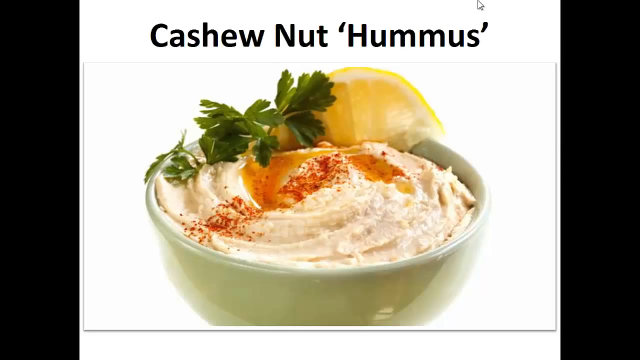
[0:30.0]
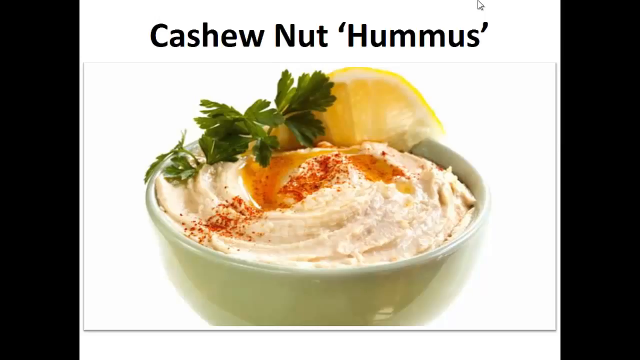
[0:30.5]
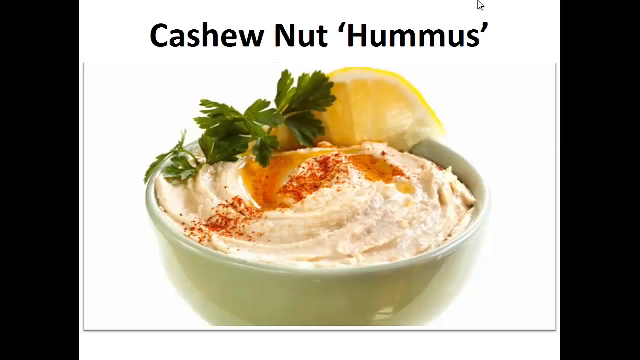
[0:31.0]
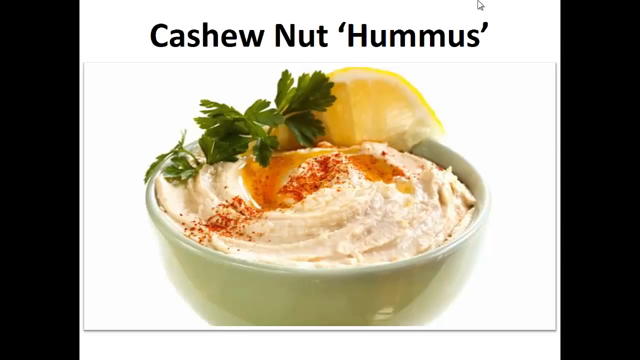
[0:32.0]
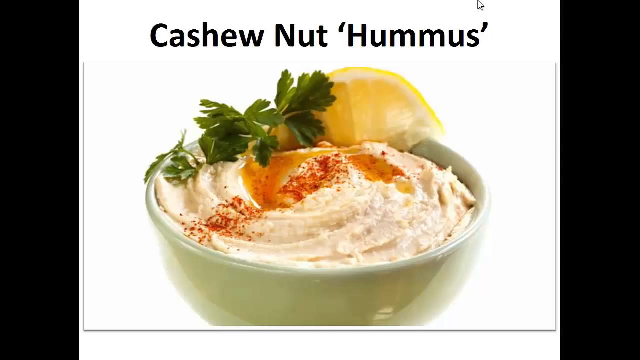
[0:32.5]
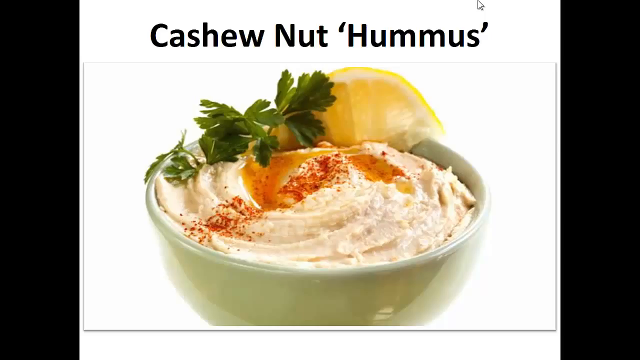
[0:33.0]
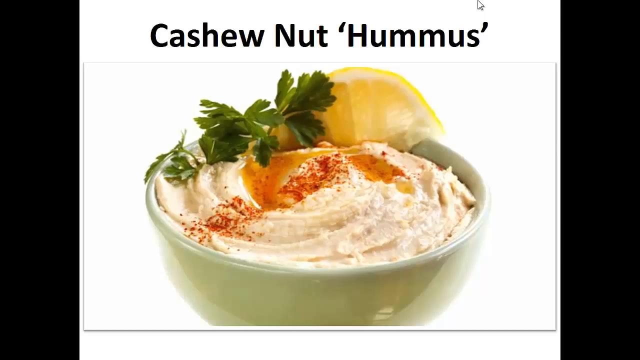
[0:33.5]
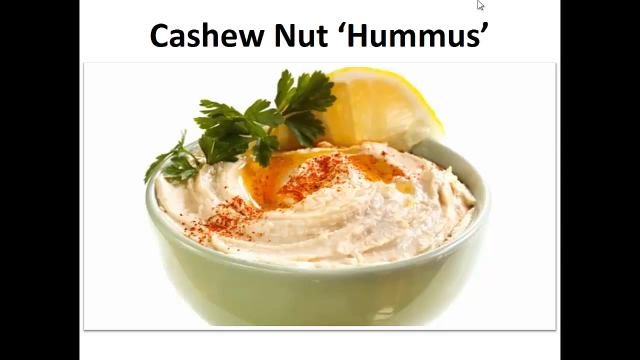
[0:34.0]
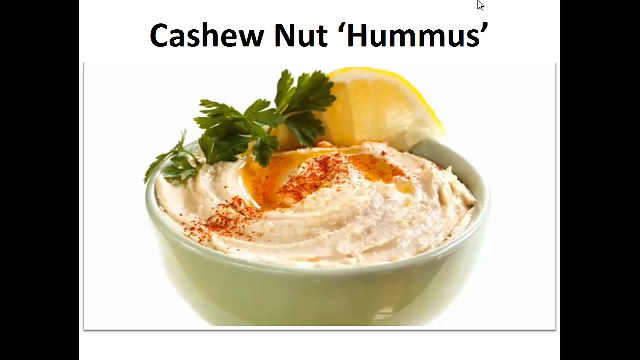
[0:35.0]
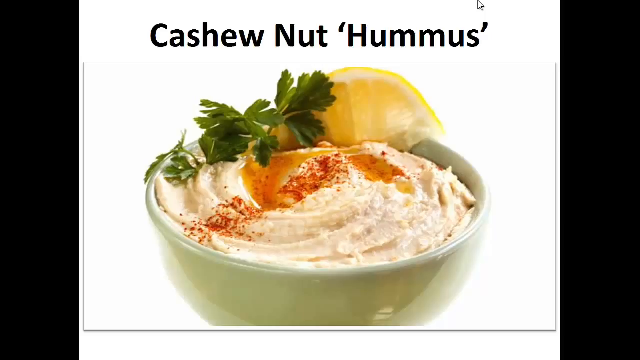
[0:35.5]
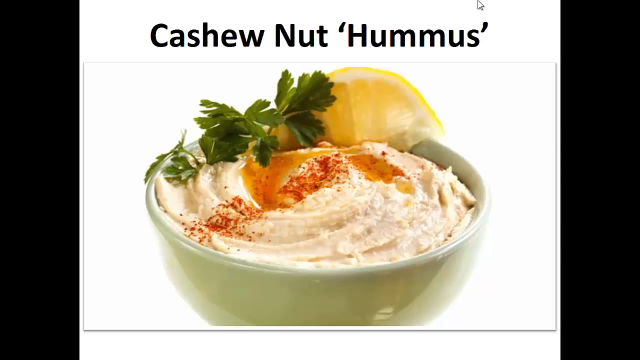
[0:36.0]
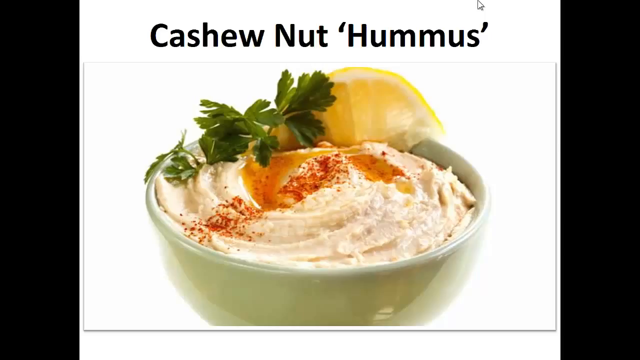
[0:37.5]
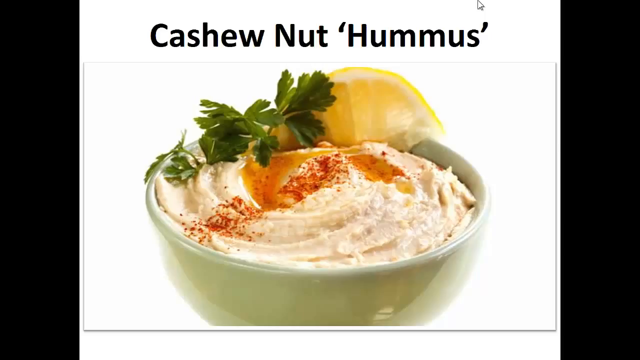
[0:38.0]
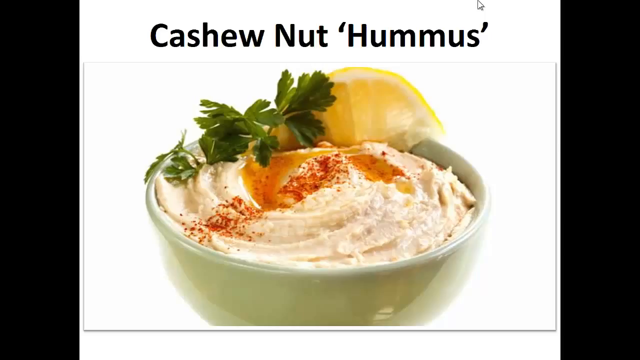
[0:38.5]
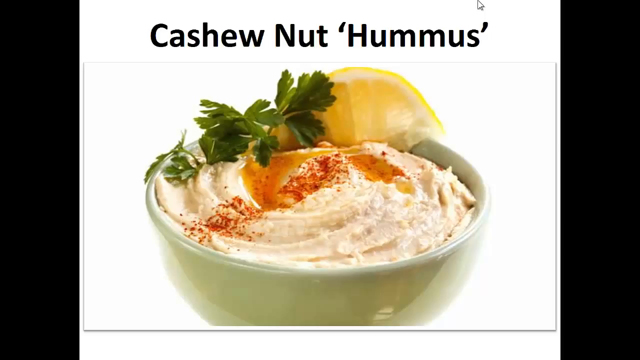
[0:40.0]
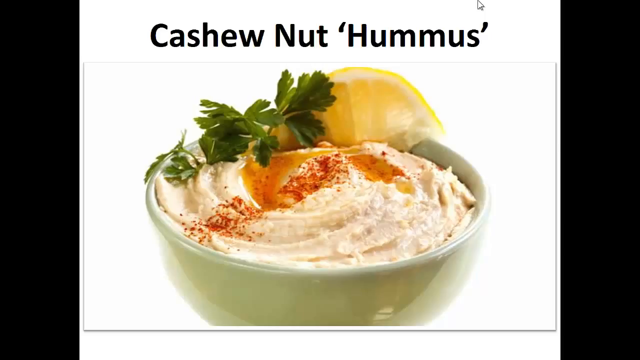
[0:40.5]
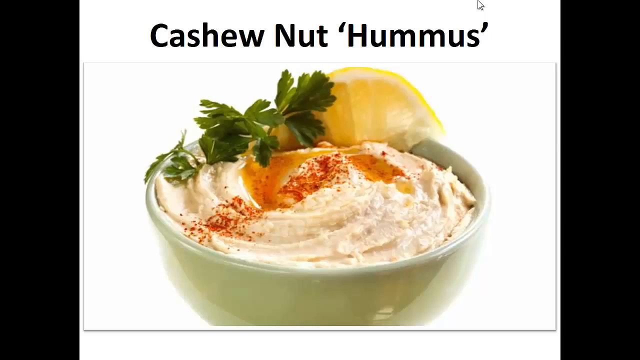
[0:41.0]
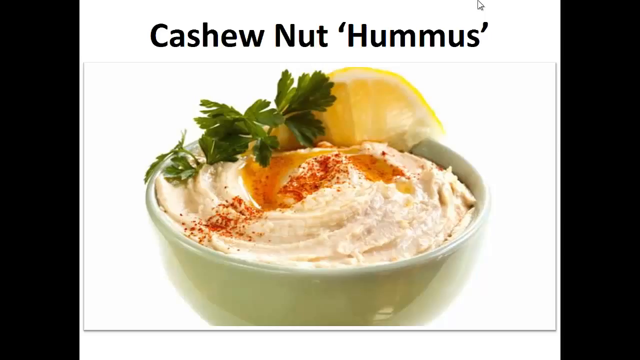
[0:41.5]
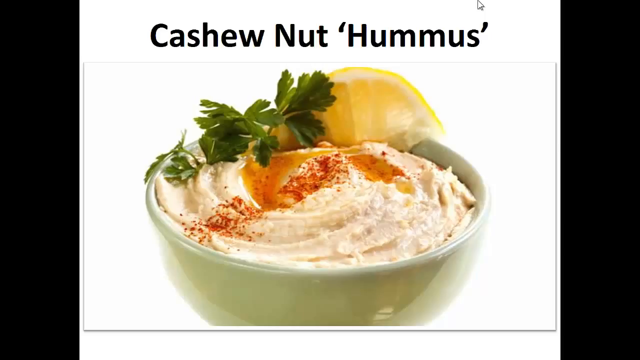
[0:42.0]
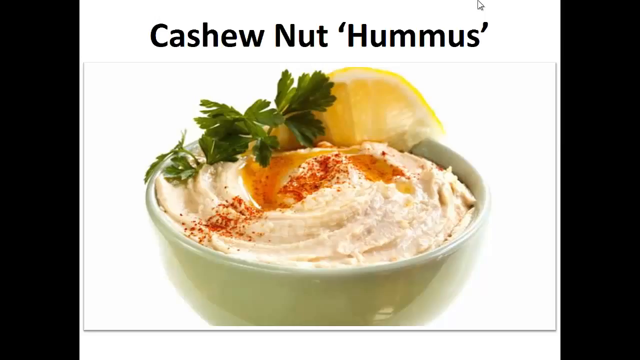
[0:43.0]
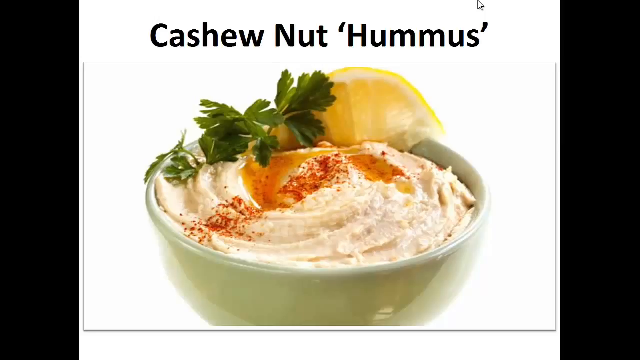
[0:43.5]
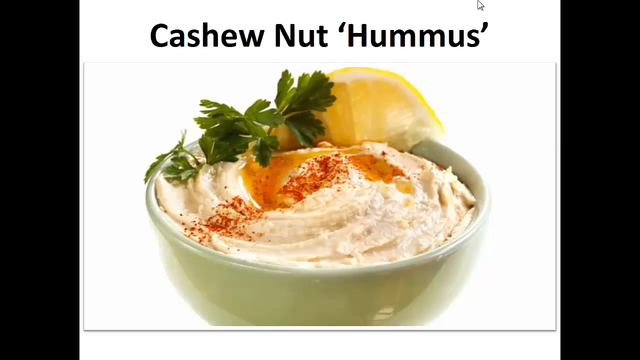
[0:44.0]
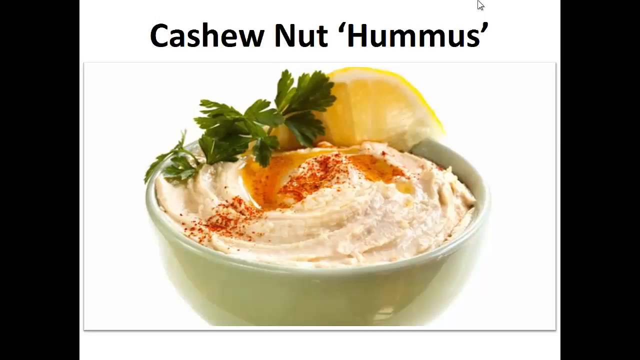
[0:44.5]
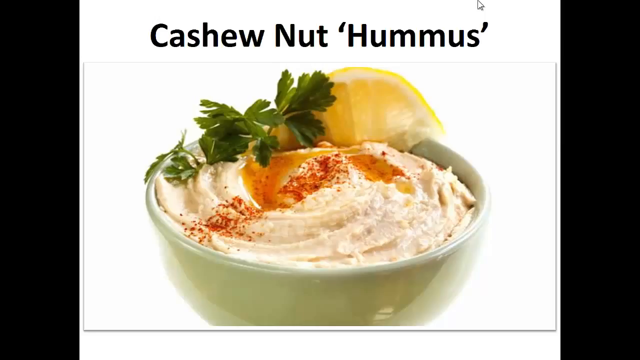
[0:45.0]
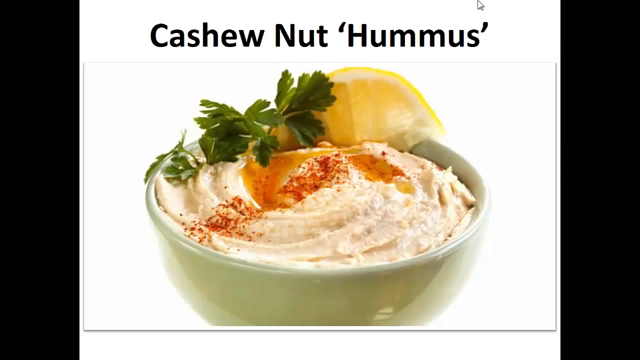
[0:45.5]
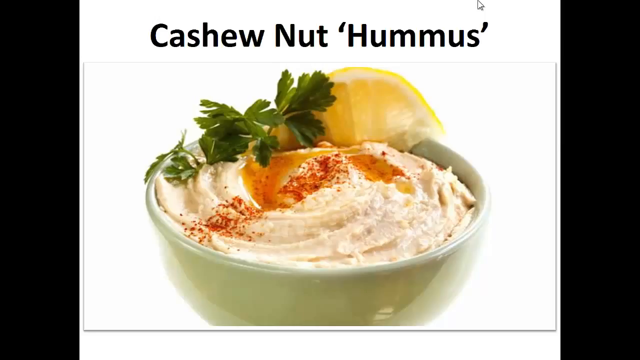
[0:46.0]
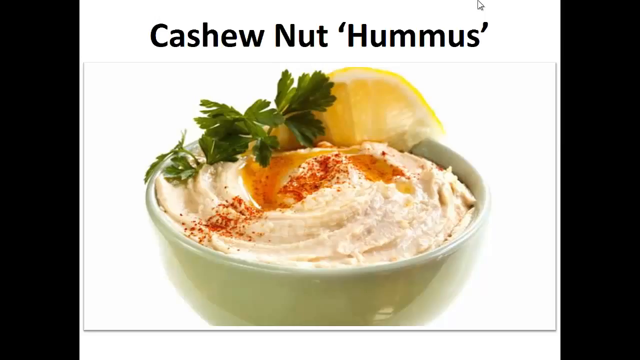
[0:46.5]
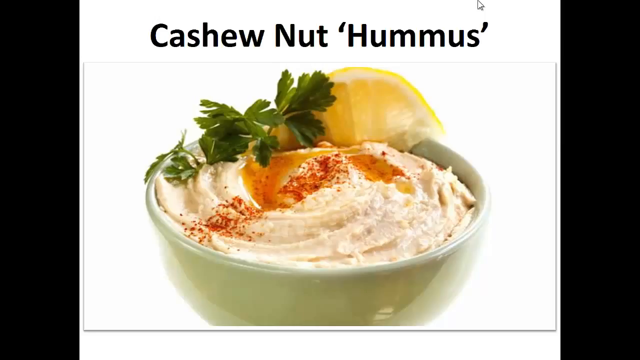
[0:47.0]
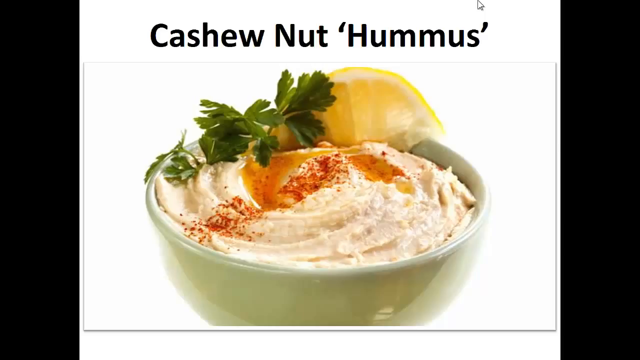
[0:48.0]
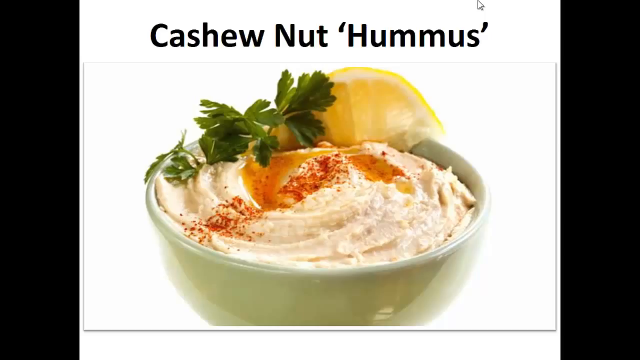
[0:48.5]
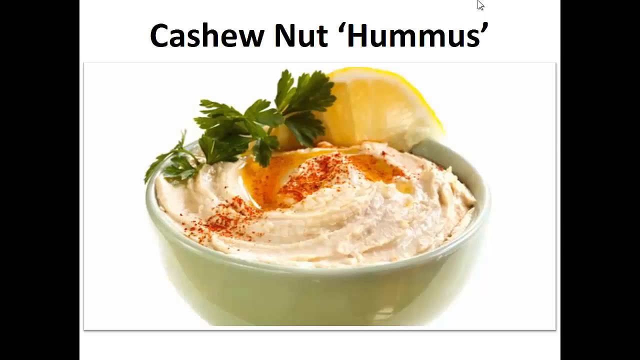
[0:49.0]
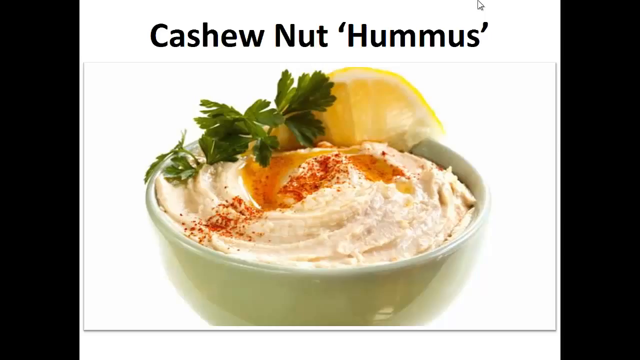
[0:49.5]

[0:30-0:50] A single still image stays on screen, titled "cashew nut hummus" at the top. It shows a bowl of cashew nut hummus that looks to be some type of yogurt-like substance filling the bowl up to the top, with some orange flavoring and seasoning on top, green leaves, and a half piece of lemon on the edge of the bowl next to the green leaves. The bowl looks to be plastic and glassy, with a reflection faintly visible, and it is shown on a plain white background.